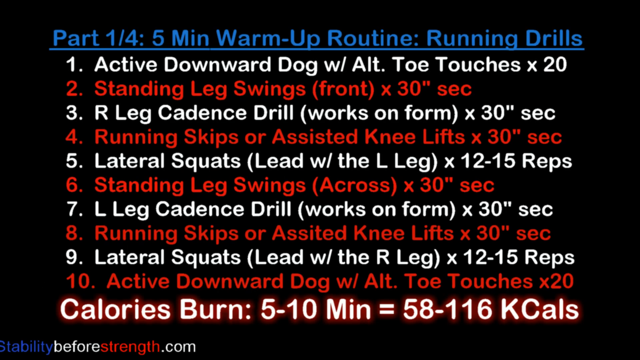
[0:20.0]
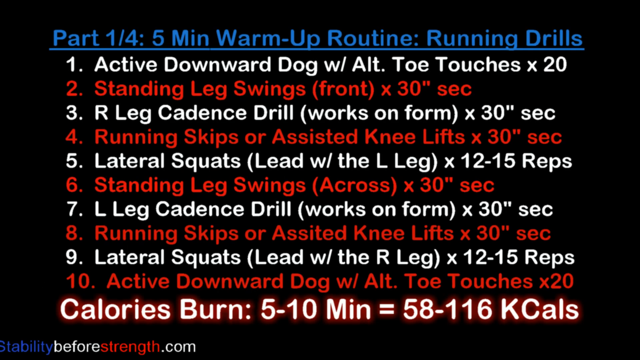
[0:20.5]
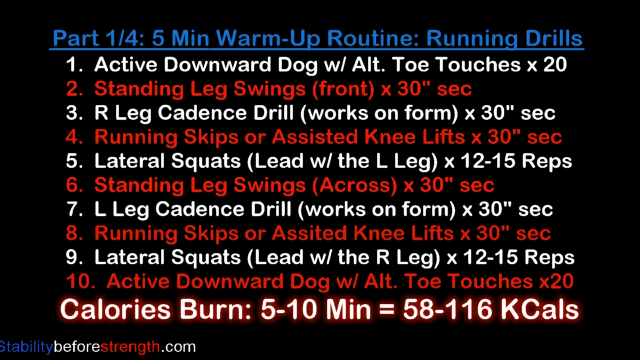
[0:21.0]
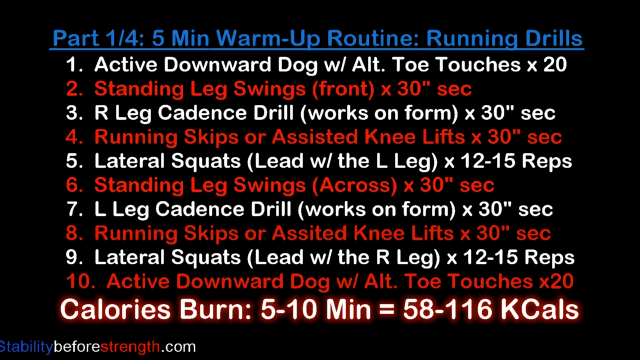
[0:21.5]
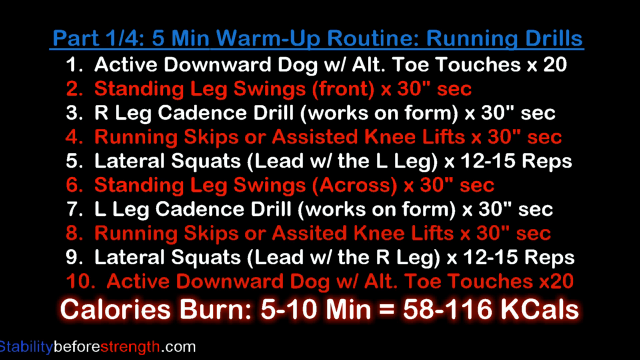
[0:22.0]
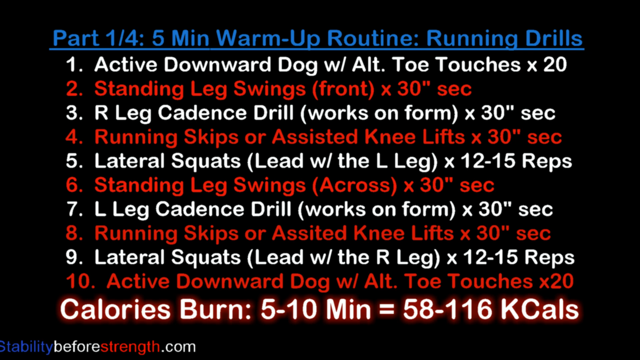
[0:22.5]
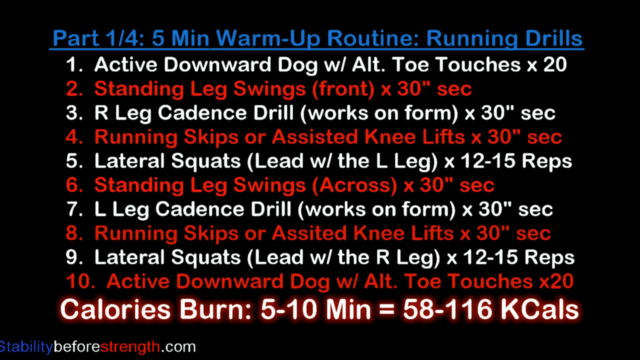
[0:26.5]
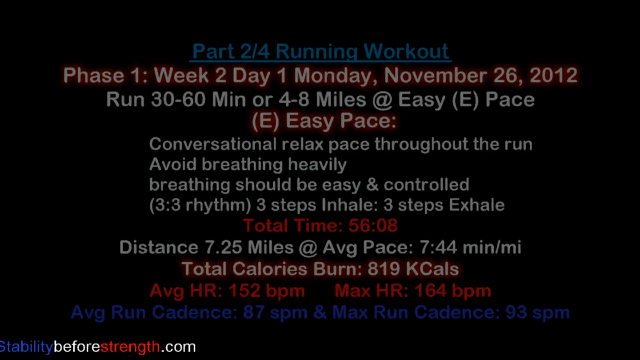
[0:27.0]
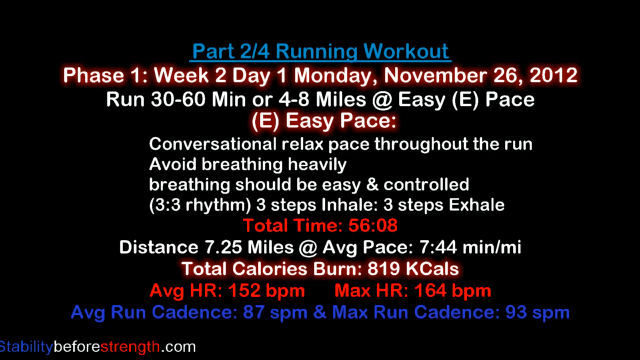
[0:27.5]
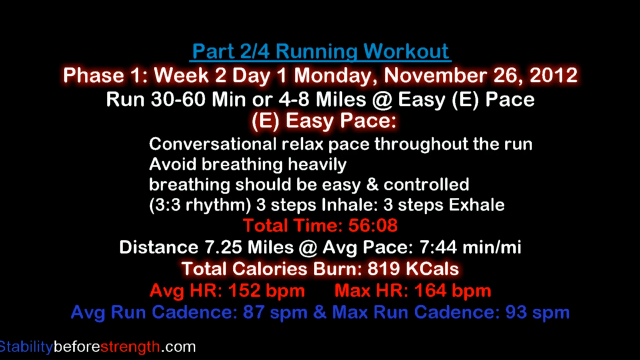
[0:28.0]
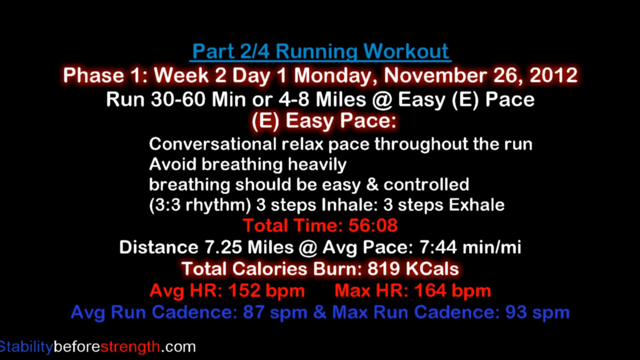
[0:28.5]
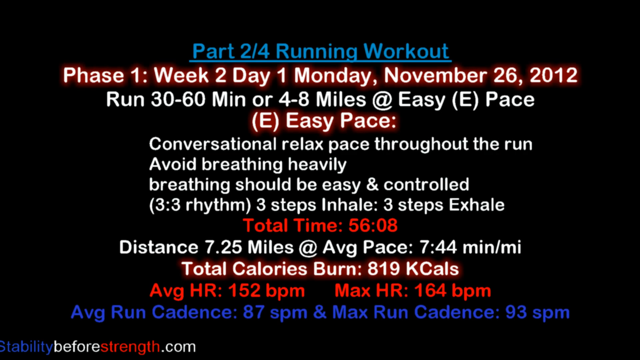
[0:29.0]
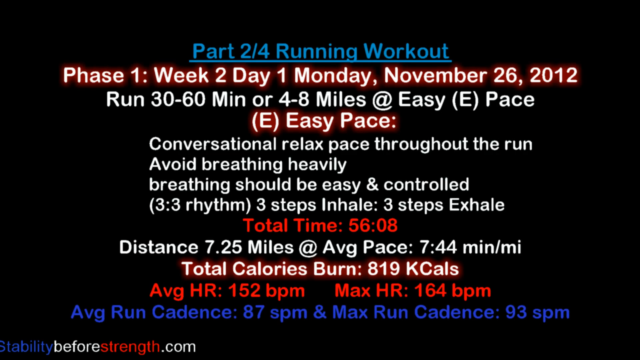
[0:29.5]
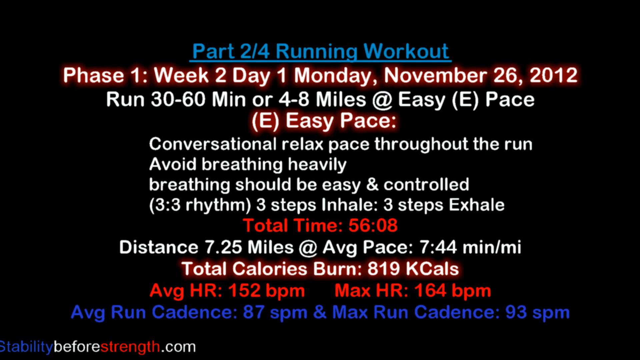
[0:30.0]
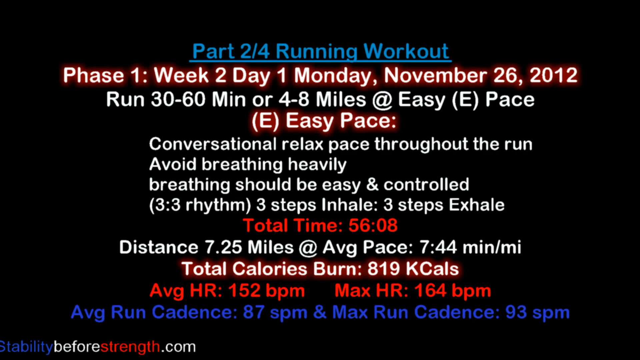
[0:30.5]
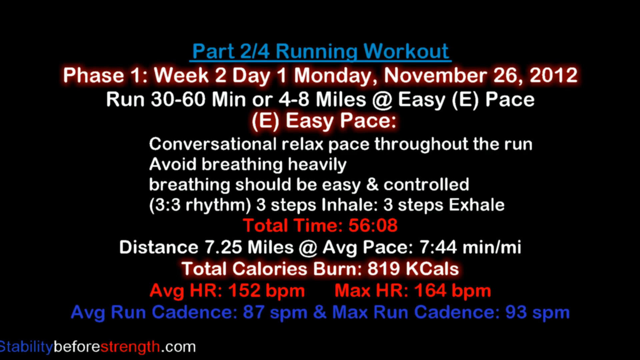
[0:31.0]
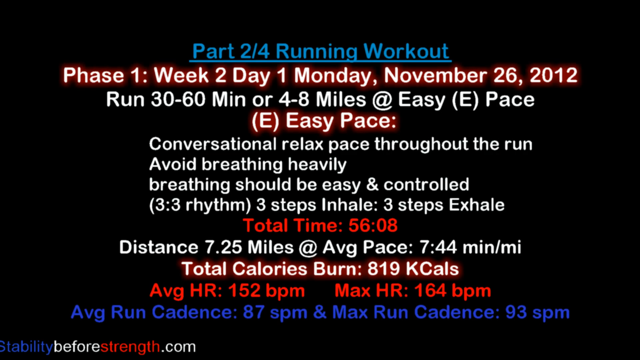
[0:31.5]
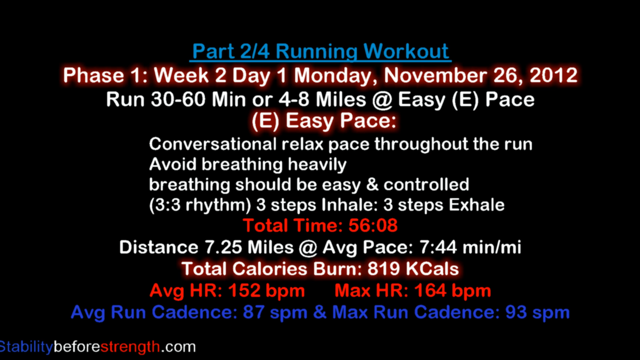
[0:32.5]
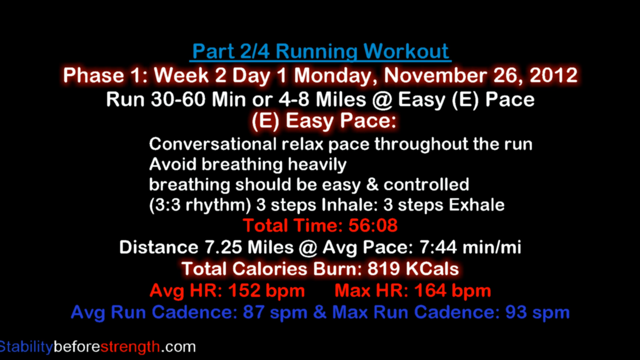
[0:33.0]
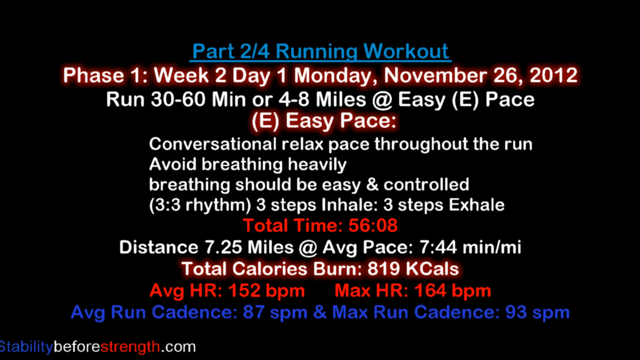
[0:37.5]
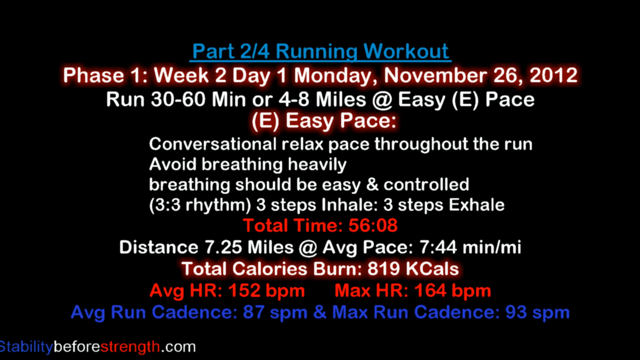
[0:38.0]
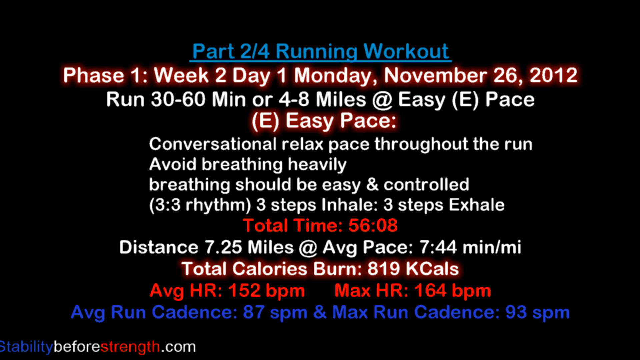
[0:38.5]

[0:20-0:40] Red text reads "Part one of four, five minute warm-up routine, running drills. 1 active downward dog with alt toe touches x 20. 2 standing leg swings front x 30 sec. 3 R leg cadence drill works on form x 30 sec. 4 running skips or assisted knee lifts x 30 sec. 5 lateral squats lead with the L leg x 12 to 15 reps. 6 standing leg swings across x 30 sec. 7 L leg cadence drill works on form x 30 sec. 8 running skips or assisted knee lifts x 30 sec. 9 lateral squats lead with the R leg x 12 to 15 reps. 10 active downward dog with alt toe touches x 20. Calories burn 5 to 10 minutes = 58 to 116 kcals." Additional hard-to-see text in white and red at the bottom appears to show a website URL. The video then goes to another black screen with blue, red and white text reading "Part two out of four, running workout, phase one, week two, day one, Monday, November 26, 2012. Run 30 to 60 minutes or 48 miles at easy pace. E easy pace: conversational relaxed pace throughout the run. Avoid breathing heavily. Breathing should be easy and controlled. Three three rhythm: three steps inhale, three steps exhale. Total time 56 minutes and eight seconds. Distance 7.25 miles at average pace 7 44 minutes miles. Total calories burn 819 kcals. Average HR 152 beats per minute. Max HR 164 beats per minute. Average run cadence 87 spm and max run cadence 93 spm."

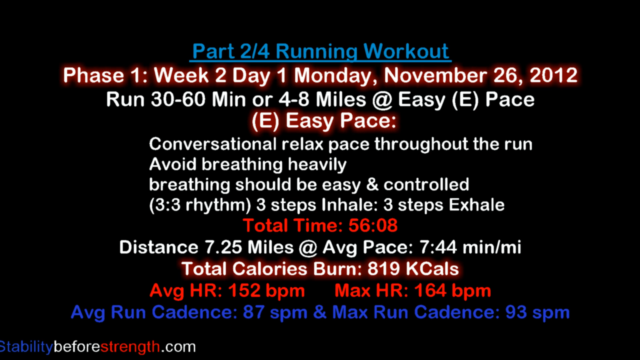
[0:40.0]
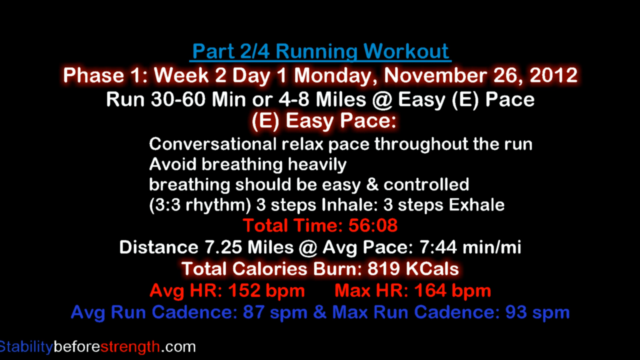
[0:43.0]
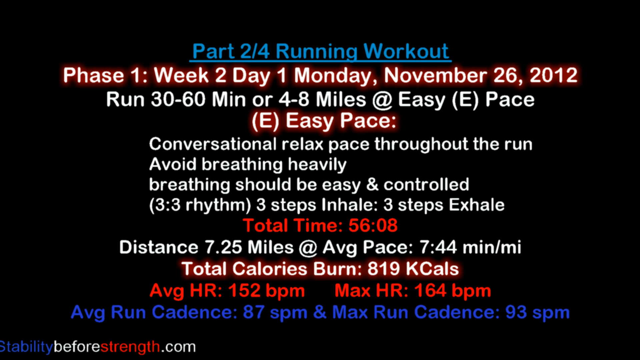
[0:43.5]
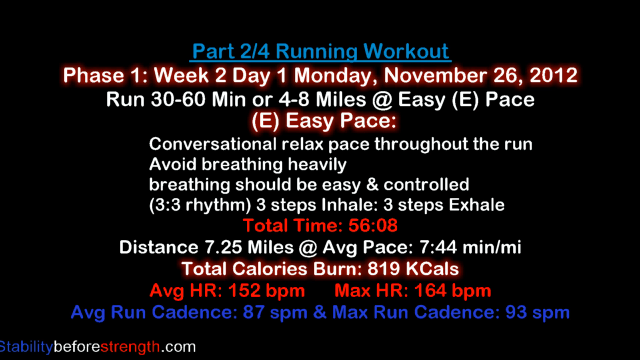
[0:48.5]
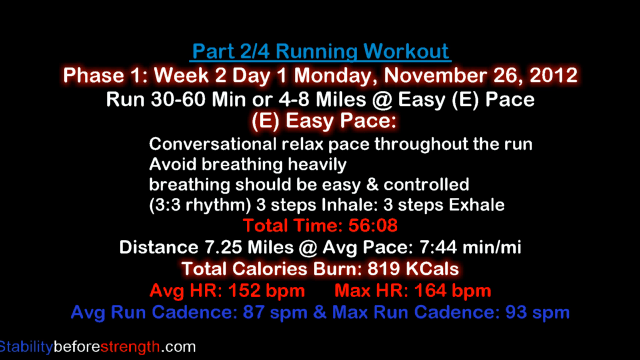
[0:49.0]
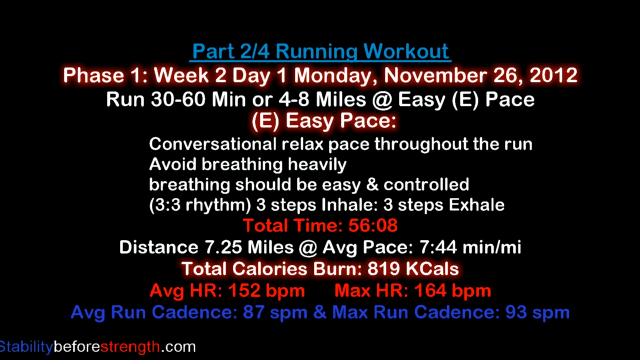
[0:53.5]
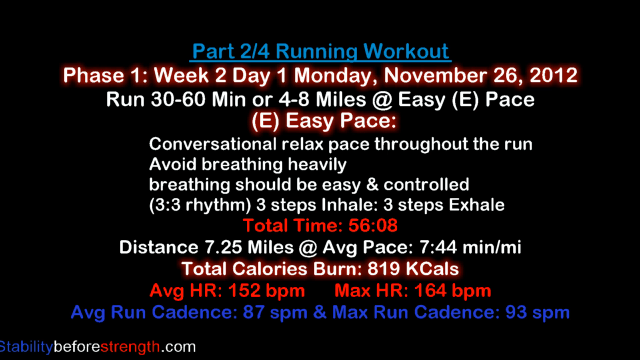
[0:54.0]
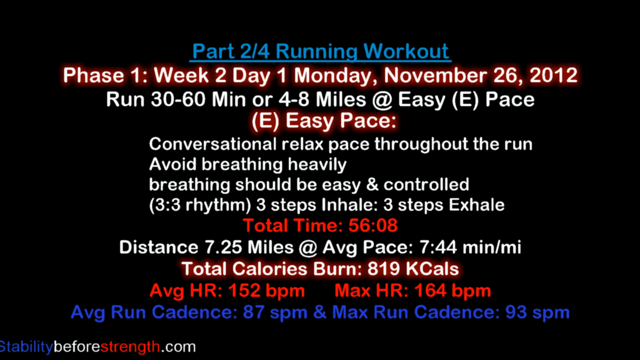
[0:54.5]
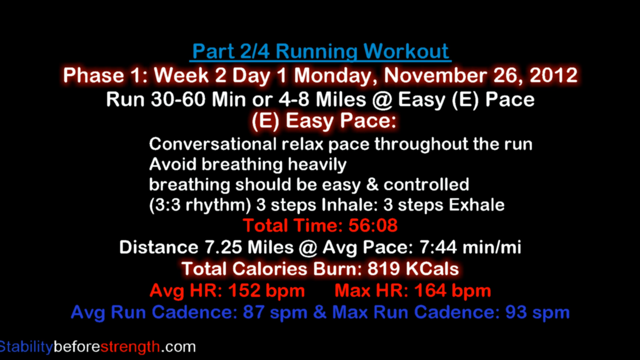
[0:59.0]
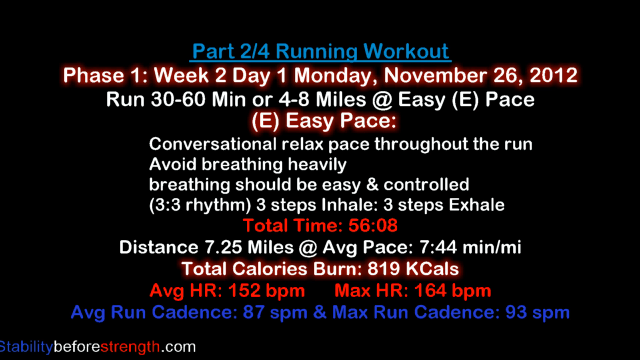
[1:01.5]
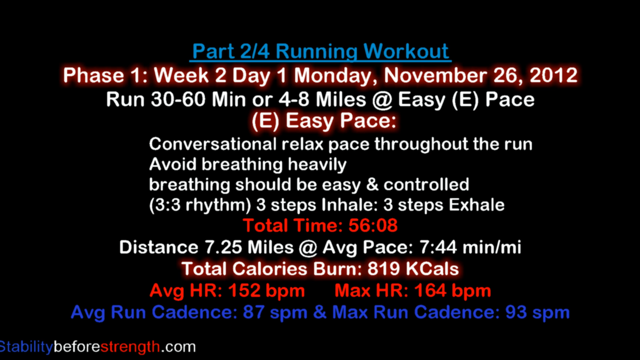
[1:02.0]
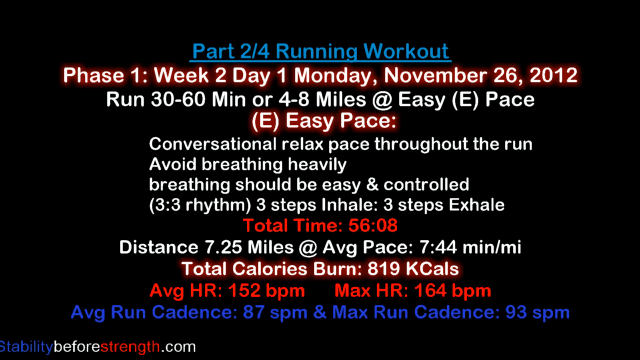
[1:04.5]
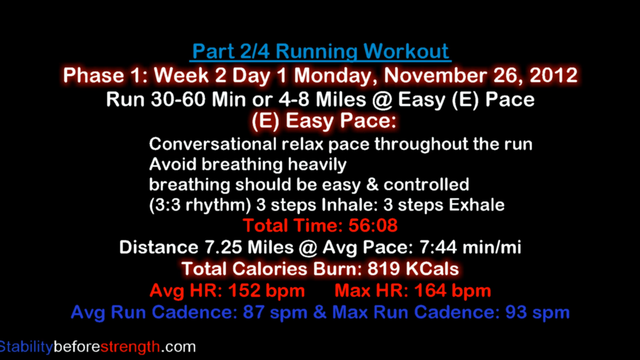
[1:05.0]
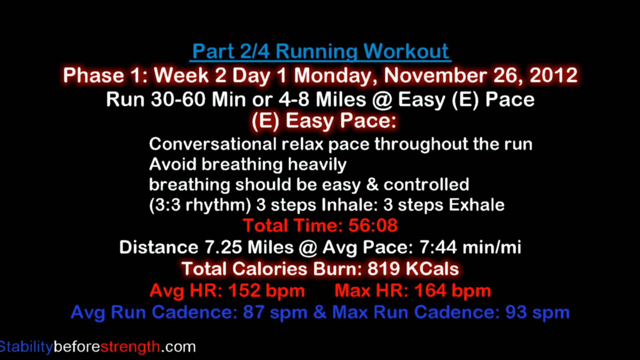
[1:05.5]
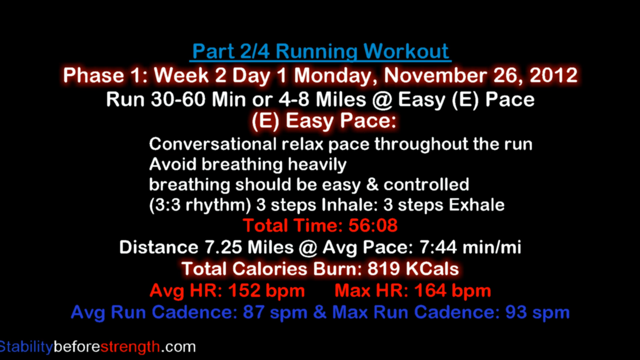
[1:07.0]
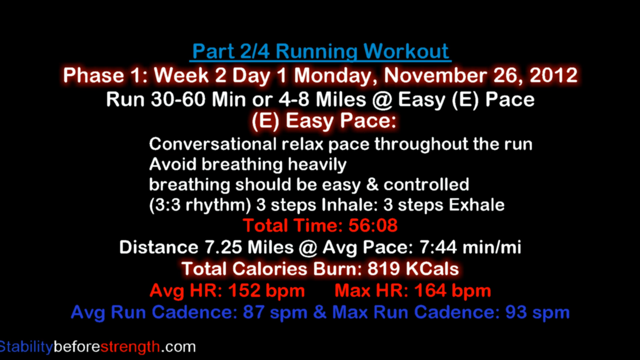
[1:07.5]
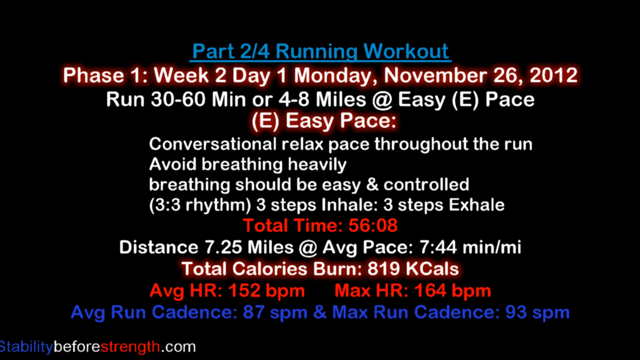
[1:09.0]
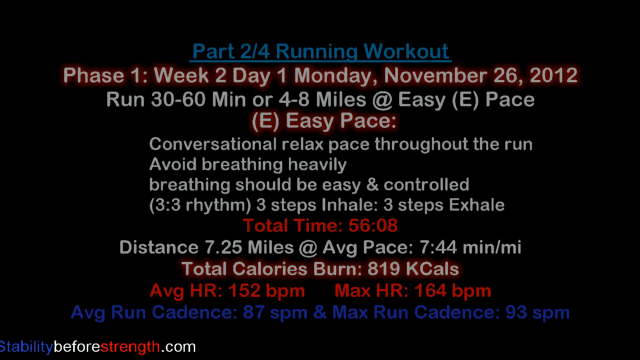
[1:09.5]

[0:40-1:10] Blue, white and red text reads "Part two out of four, running workout. Phase one, week two, day one, Monday, November 26, 2012. Run 30 to 60 minutes or 48 miles at easy pace. E, easy pace, conversational relaxed pace throughout the run. Avoid breathing heavily. Breathing should be easy and controlled. Three, three rhythm, three steps inhale, three steps exhale. Total time 56 minutes, eight seconds. Distance 7.25 miles at average pace seven minutes and 44. Total calories burned 819 kcals. Average heart rate 152 beats per minute. Max heart rate 164 beats per minute. Average run cadence 87 SPM, and max run cadence 93 SPM." In the bottom left corner there is additional white and red text that looks like a website URL, with the words "before" and "com" visible. The screen slowly fades out at the end.